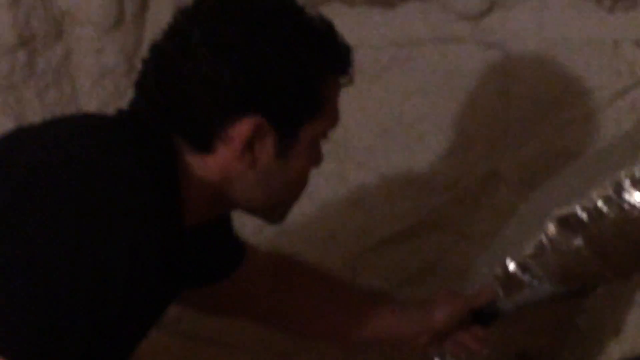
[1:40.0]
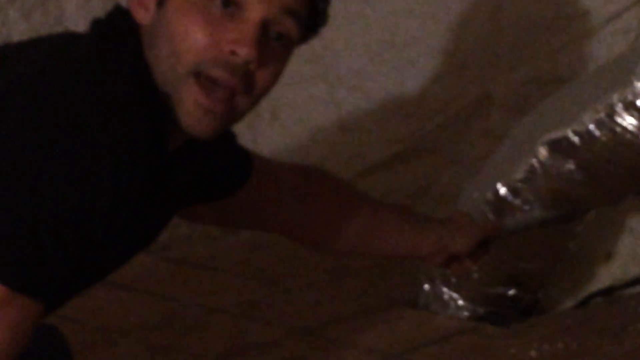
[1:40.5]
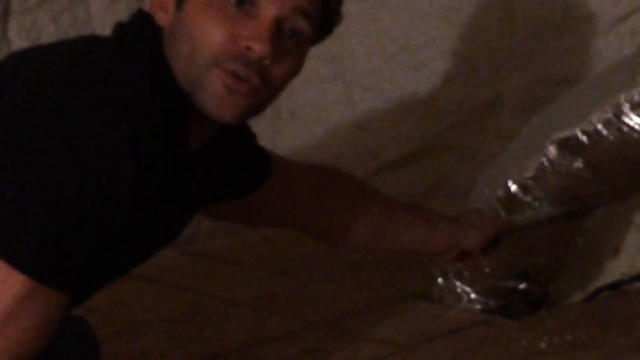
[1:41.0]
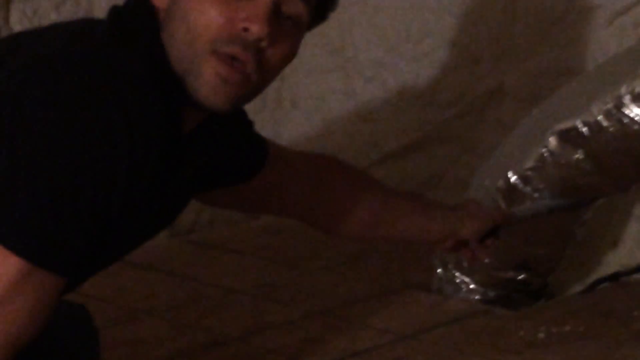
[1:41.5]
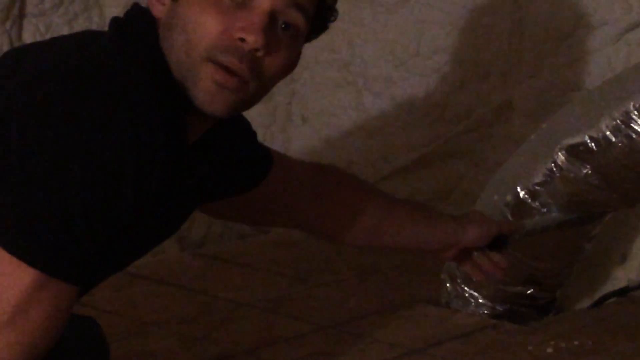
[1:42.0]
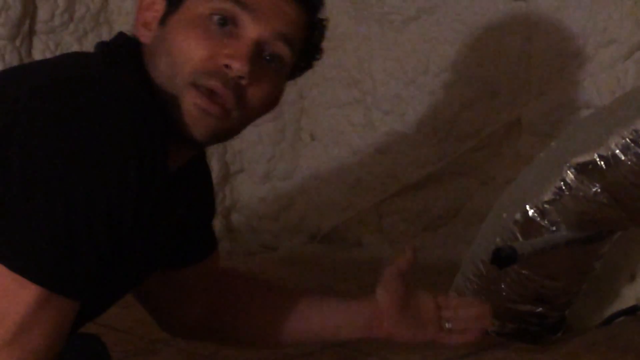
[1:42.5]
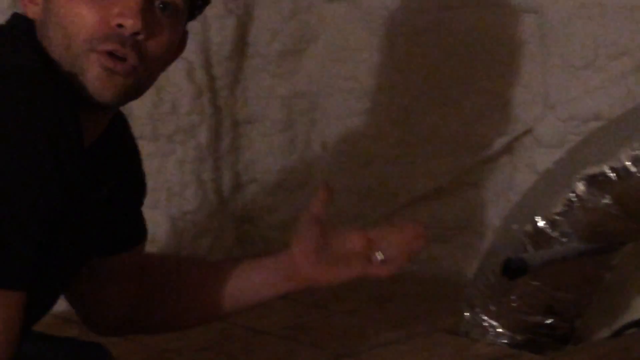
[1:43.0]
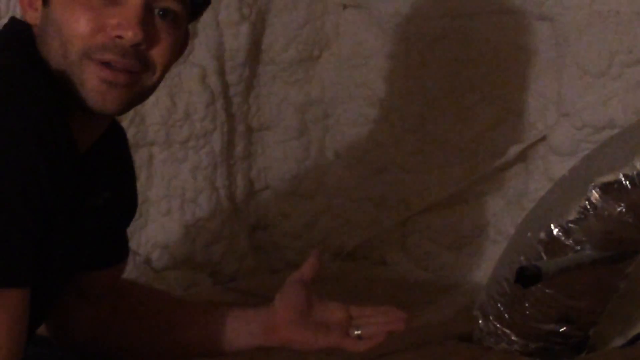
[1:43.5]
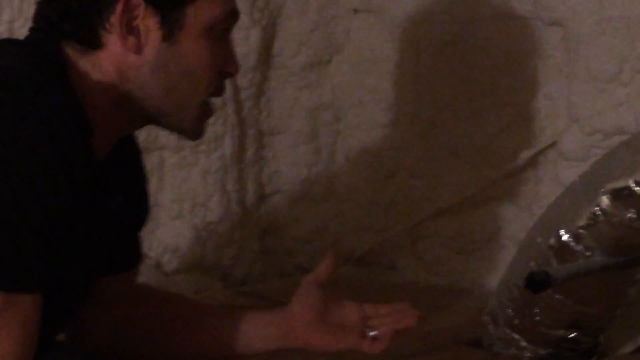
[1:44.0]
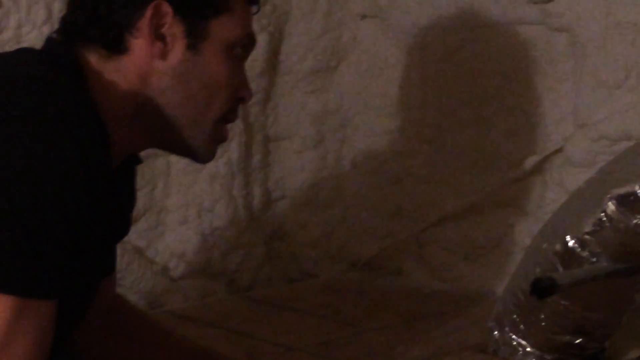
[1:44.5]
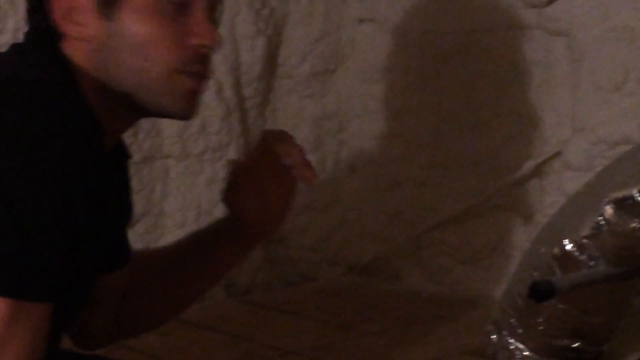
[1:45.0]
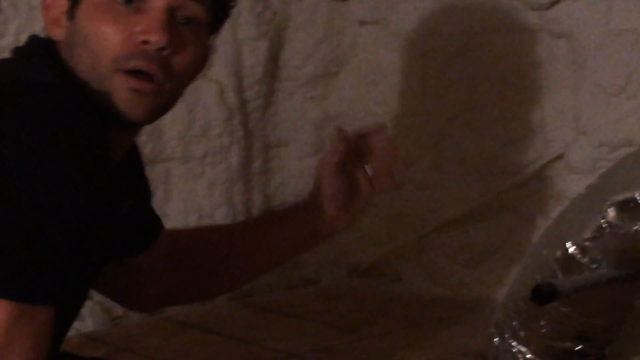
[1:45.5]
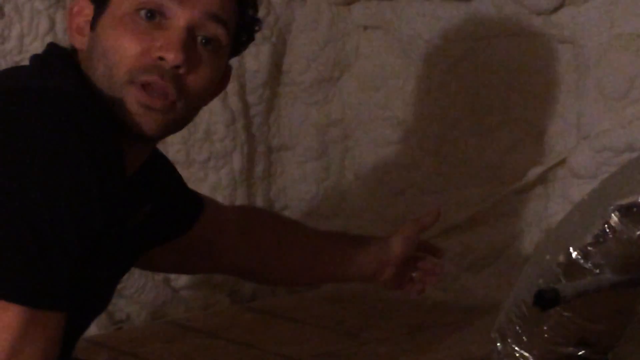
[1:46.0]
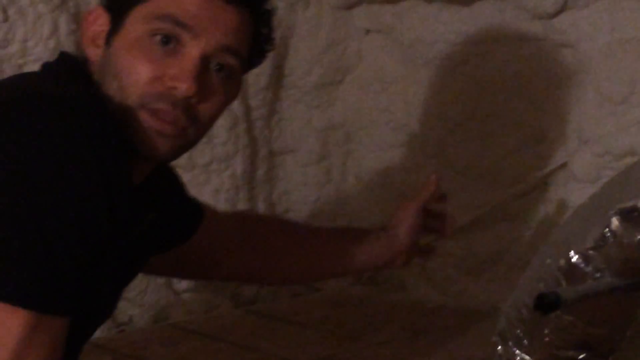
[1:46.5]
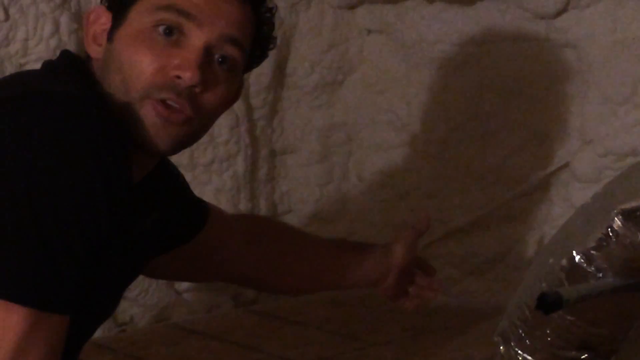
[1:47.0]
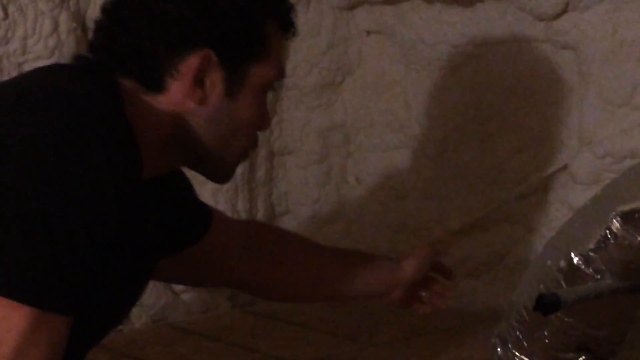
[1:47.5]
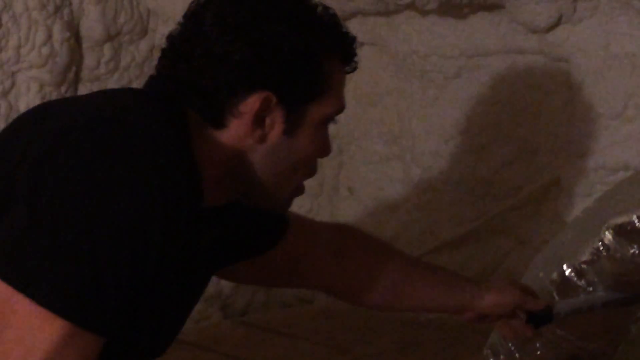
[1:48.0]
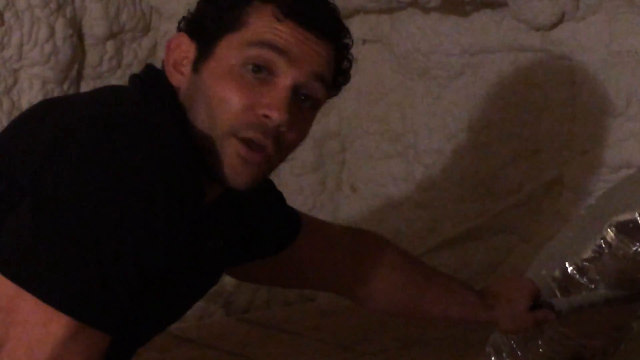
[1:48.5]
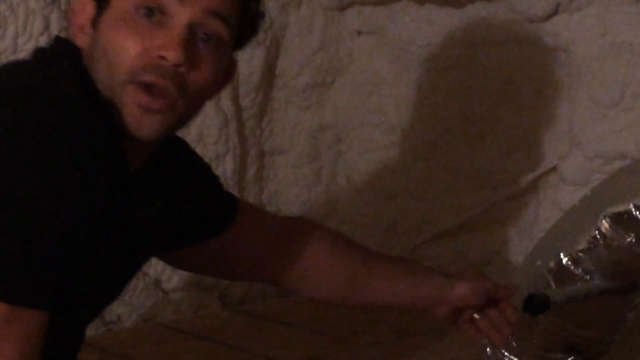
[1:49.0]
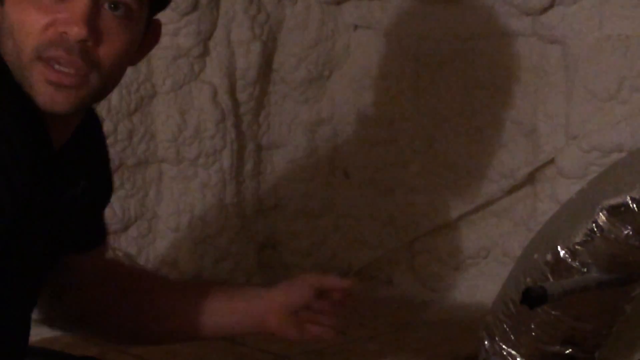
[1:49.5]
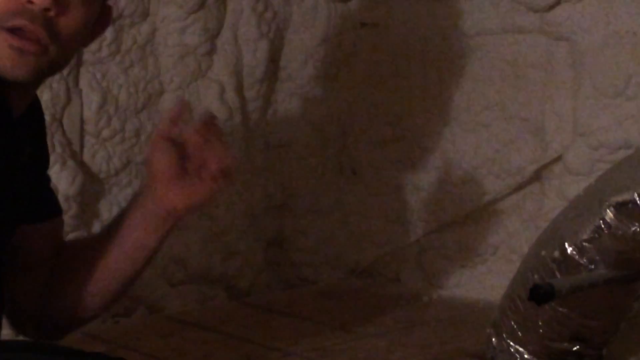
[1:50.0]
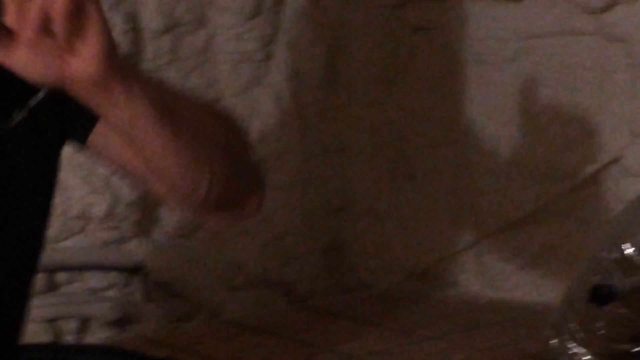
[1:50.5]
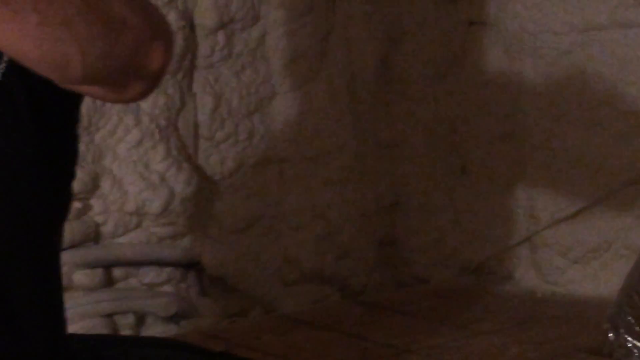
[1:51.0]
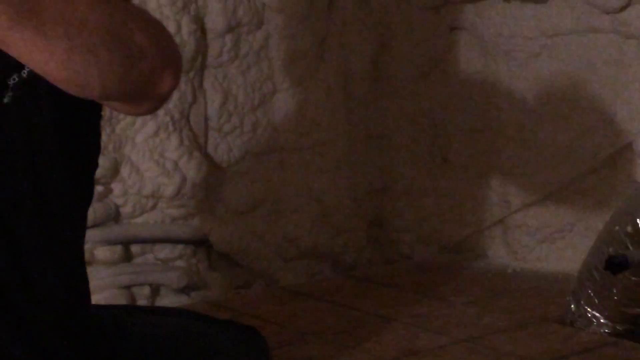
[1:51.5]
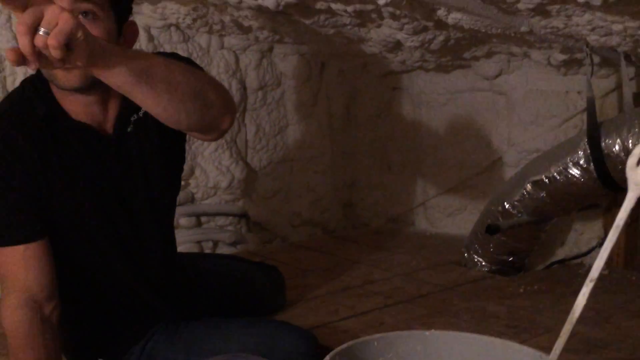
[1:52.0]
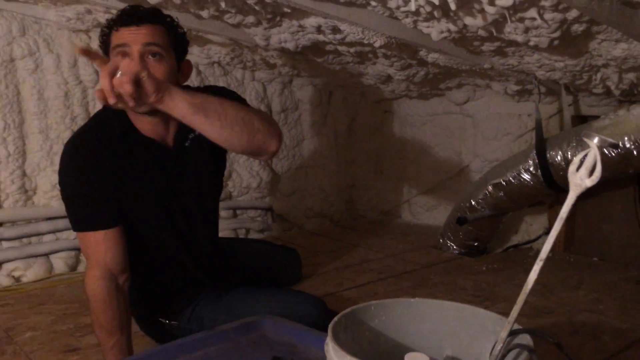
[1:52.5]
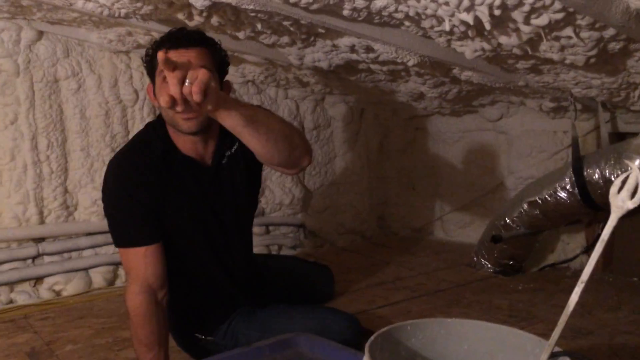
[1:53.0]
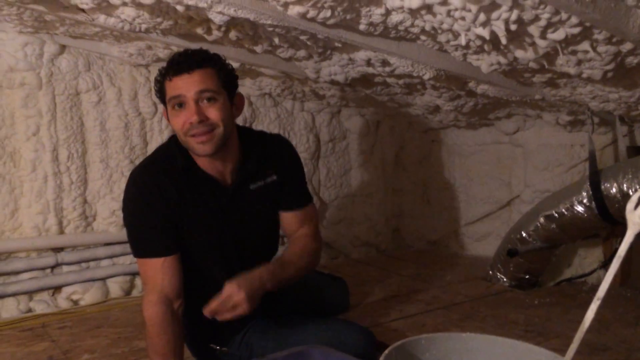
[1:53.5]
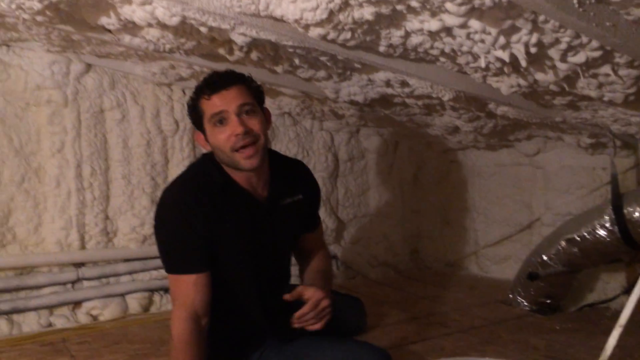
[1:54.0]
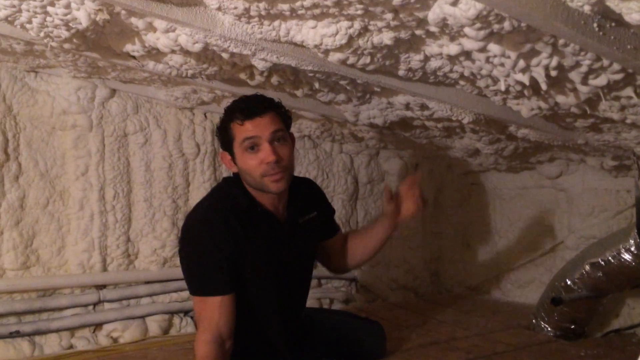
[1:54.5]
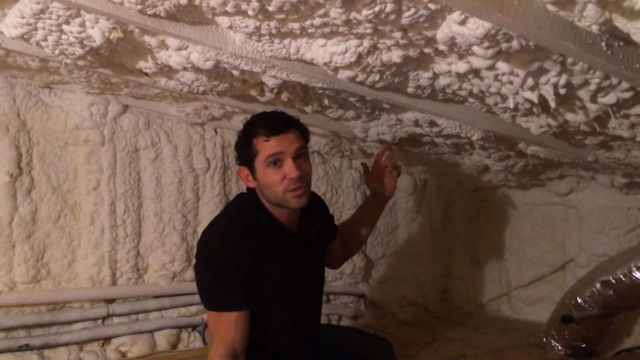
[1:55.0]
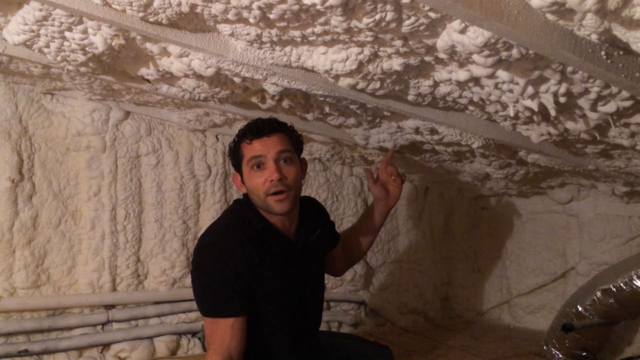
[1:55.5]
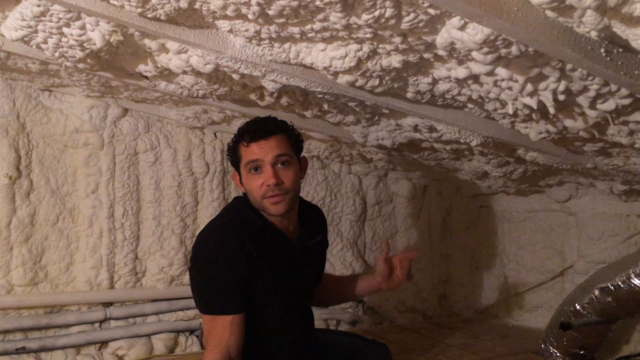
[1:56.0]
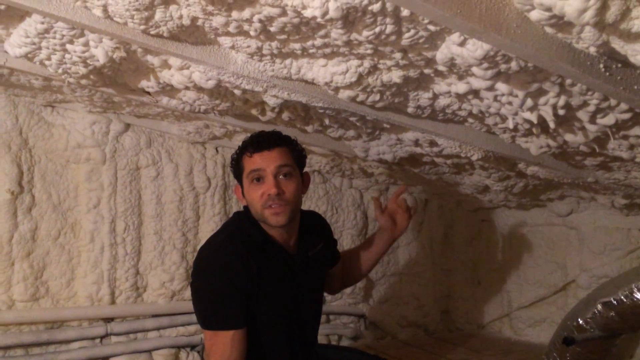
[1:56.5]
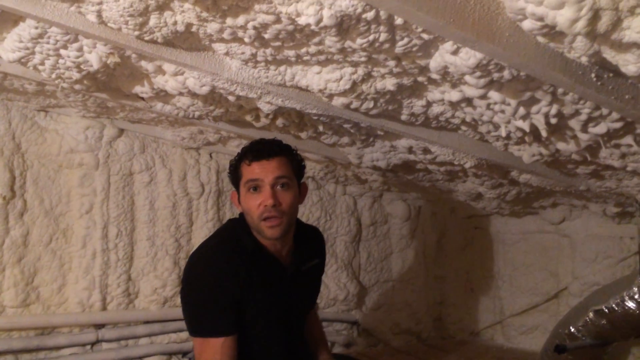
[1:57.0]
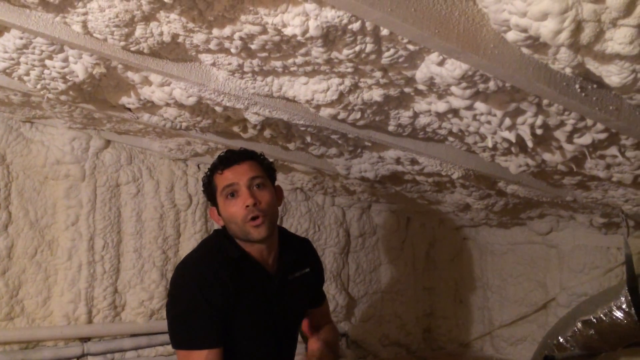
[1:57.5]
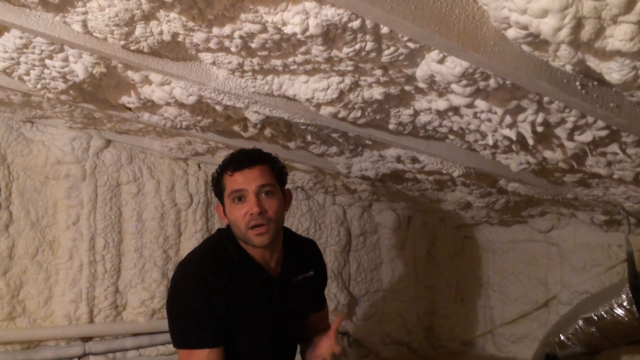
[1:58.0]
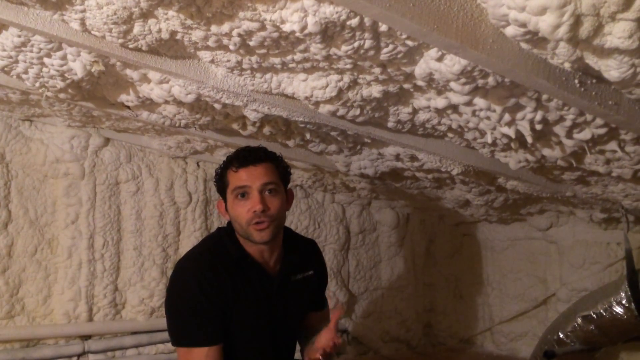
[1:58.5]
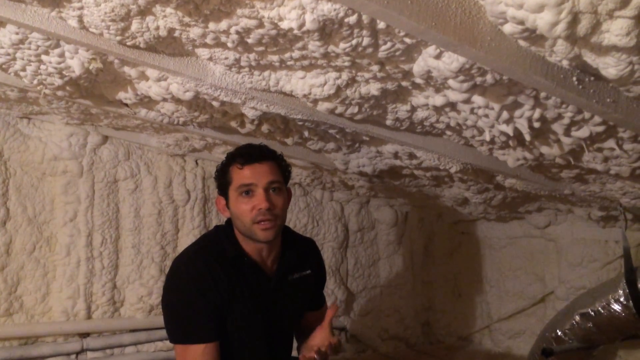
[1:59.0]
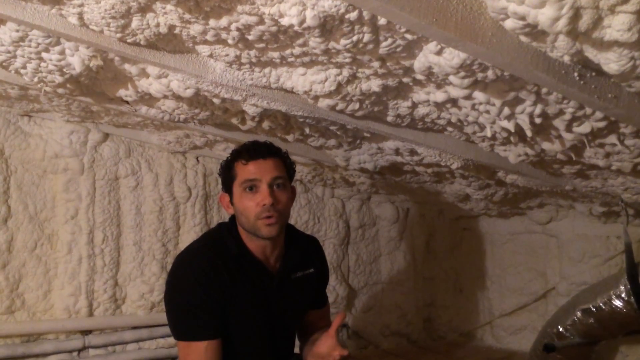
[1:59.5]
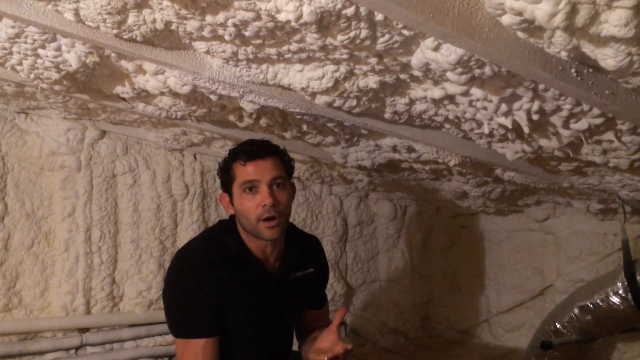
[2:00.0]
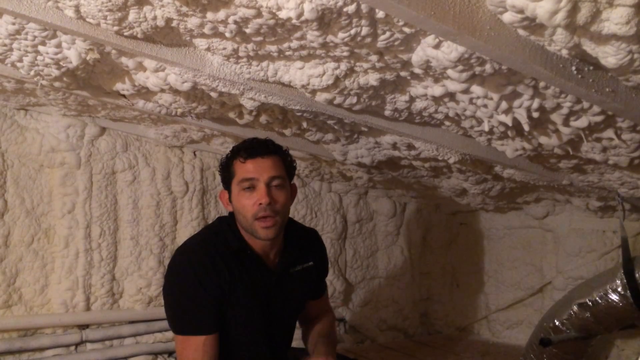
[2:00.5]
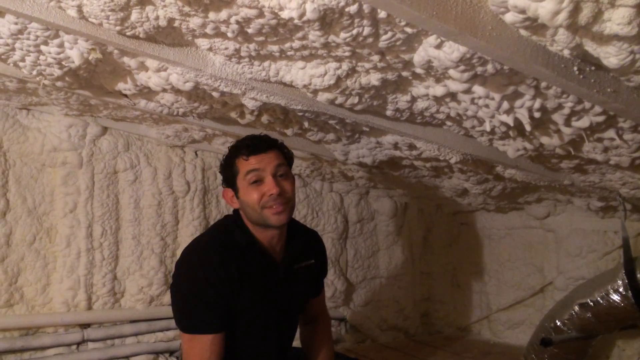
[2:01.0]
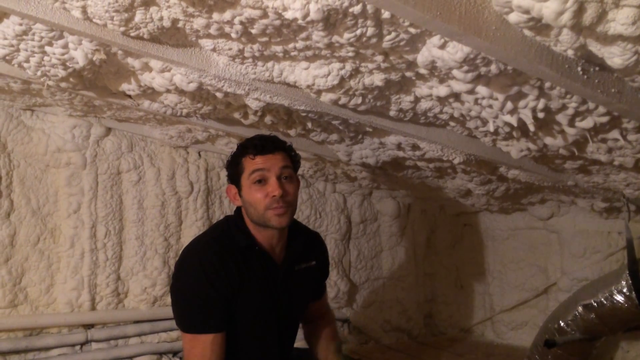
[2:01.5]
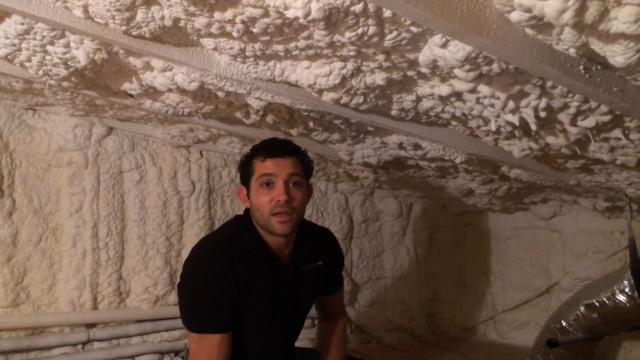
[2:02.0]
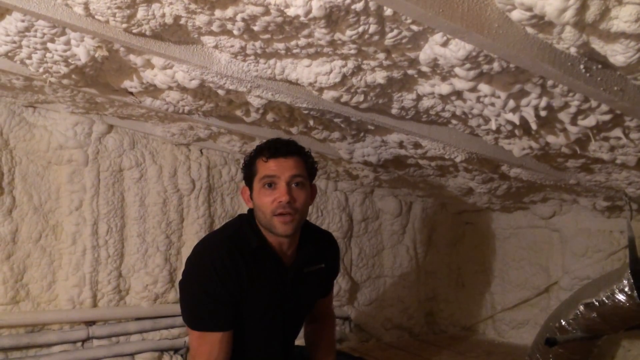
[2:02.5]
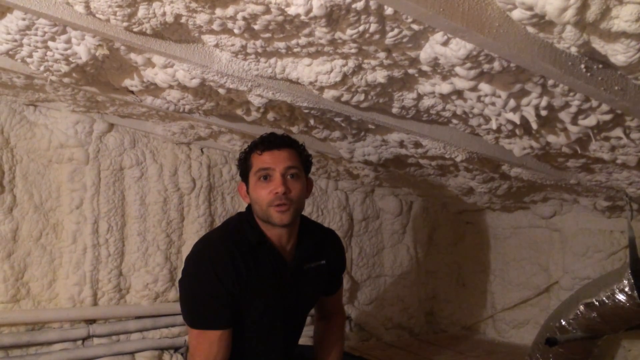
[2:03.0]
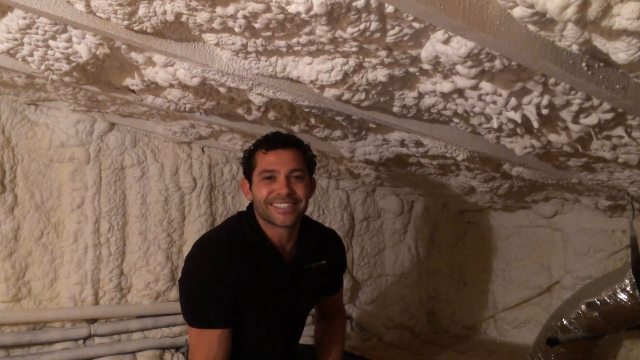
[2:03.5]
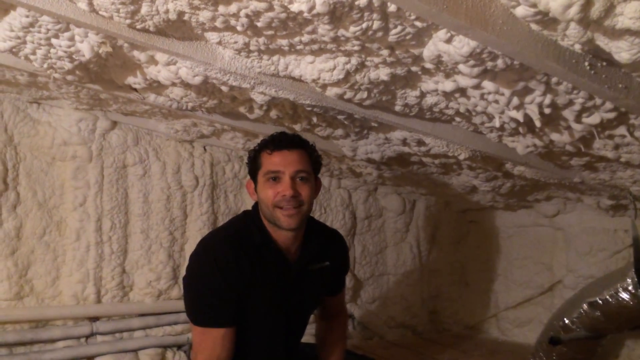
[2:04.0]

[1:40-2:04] Another pipe is on the ground, the same as the one on top. The pipes seem not yet to be connected to each other, and the one on the ground has a cap.